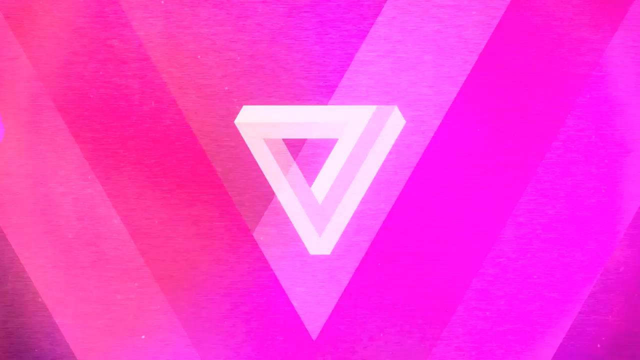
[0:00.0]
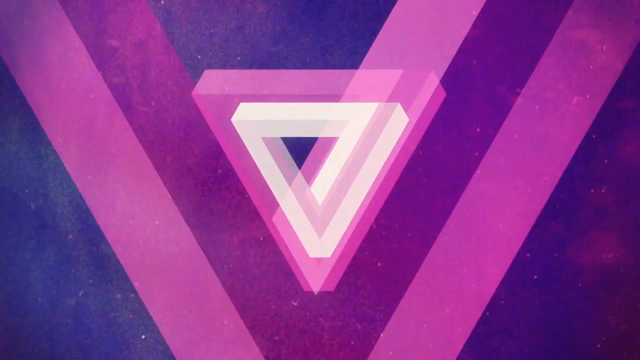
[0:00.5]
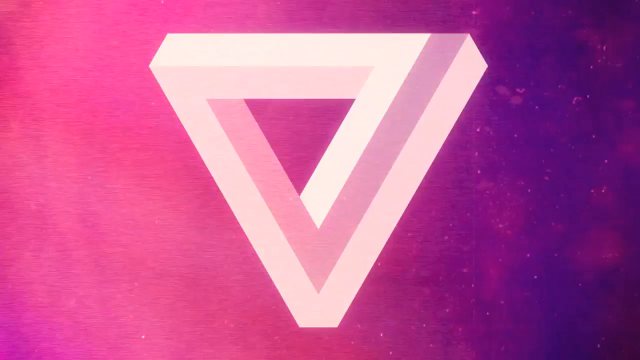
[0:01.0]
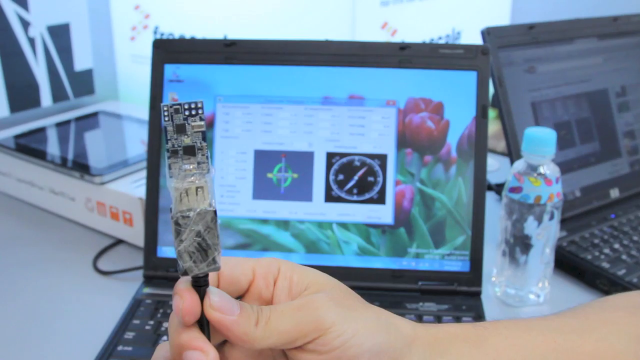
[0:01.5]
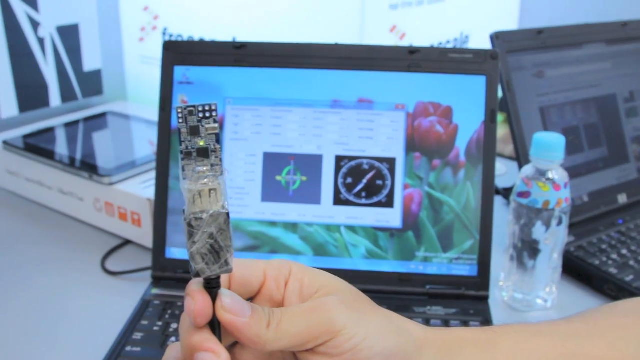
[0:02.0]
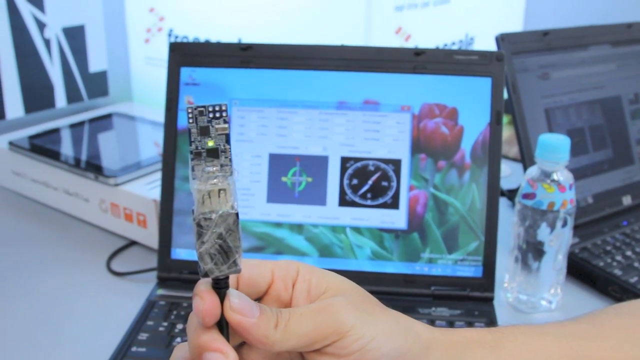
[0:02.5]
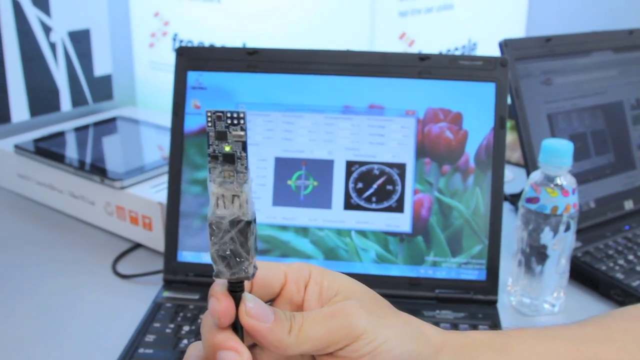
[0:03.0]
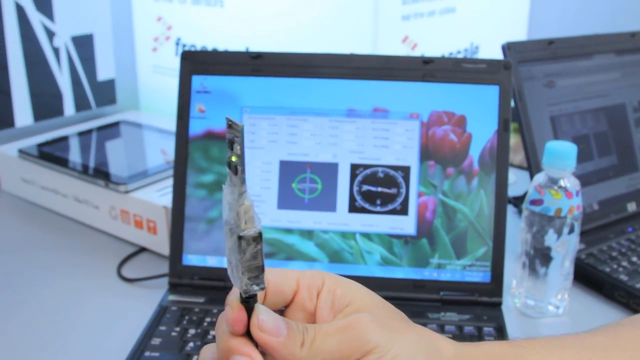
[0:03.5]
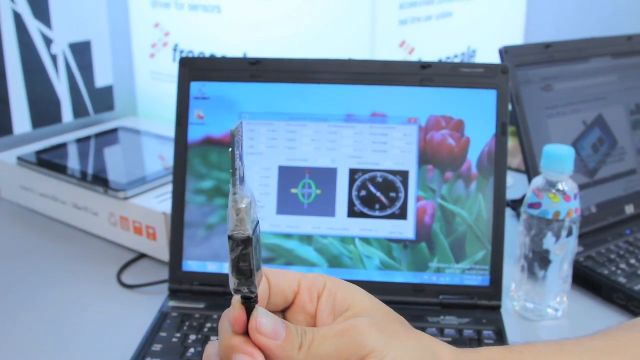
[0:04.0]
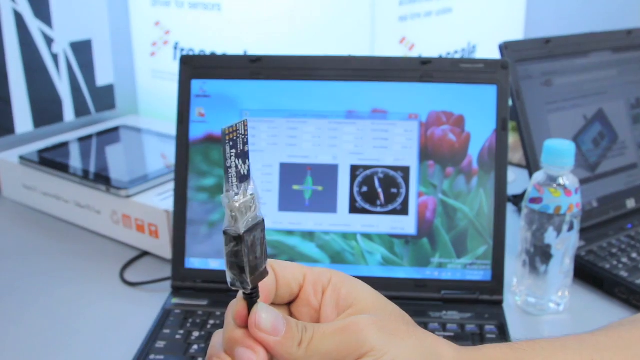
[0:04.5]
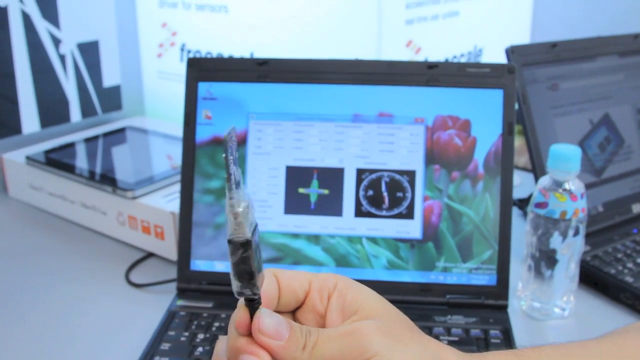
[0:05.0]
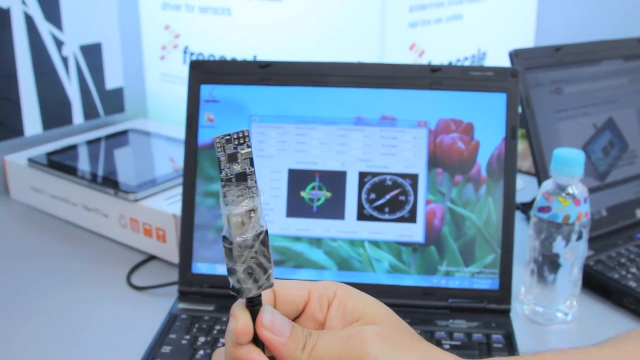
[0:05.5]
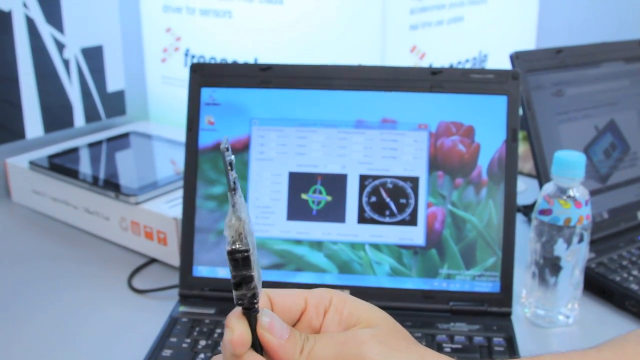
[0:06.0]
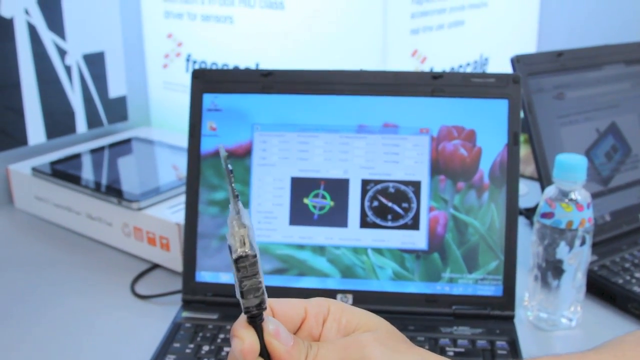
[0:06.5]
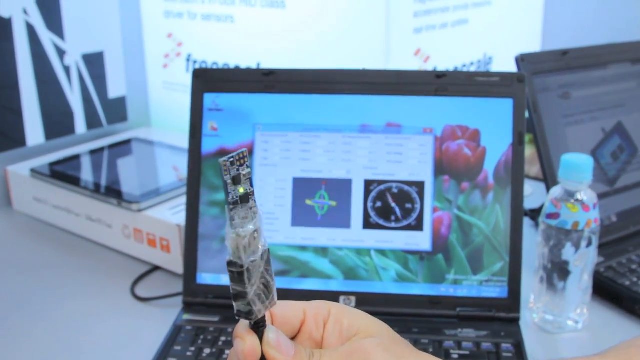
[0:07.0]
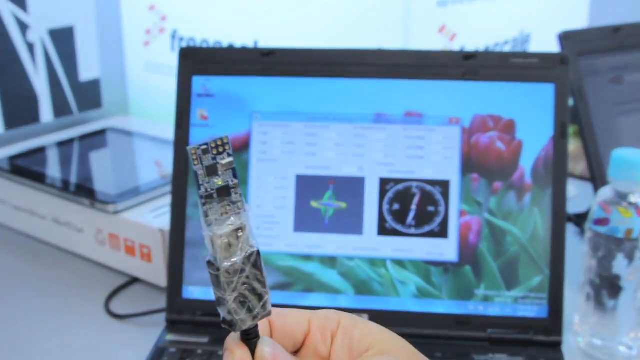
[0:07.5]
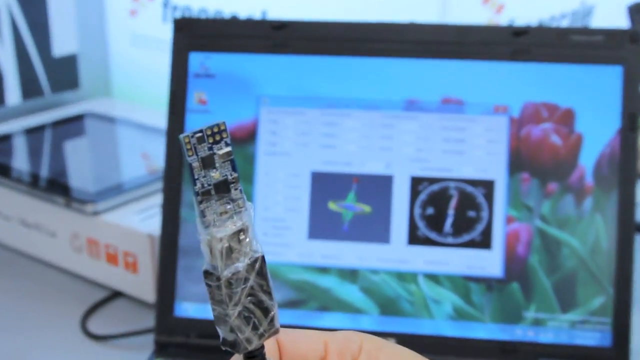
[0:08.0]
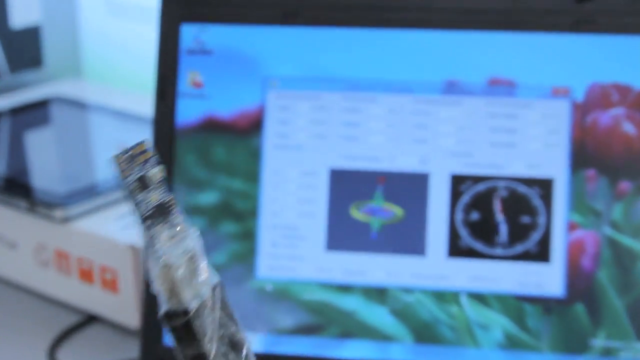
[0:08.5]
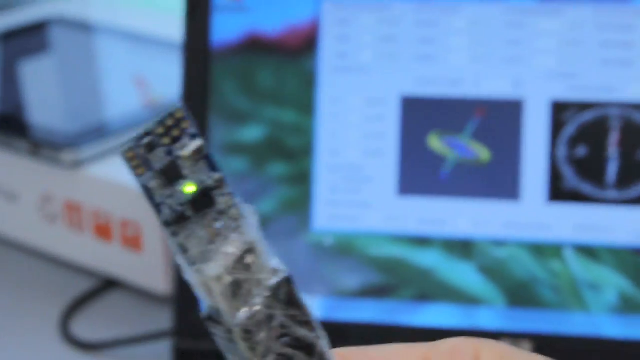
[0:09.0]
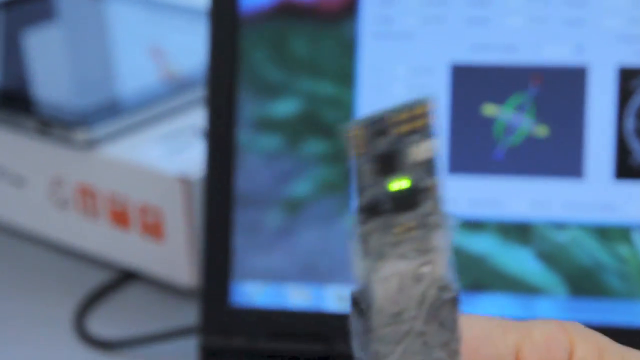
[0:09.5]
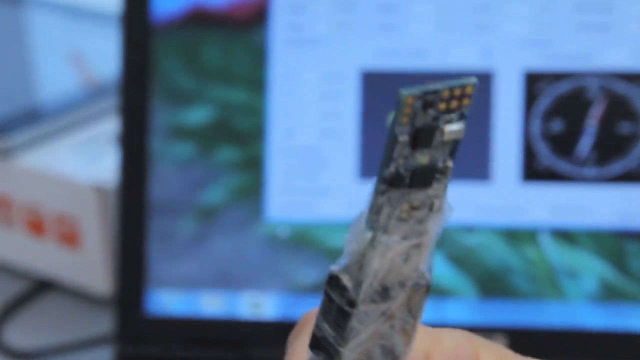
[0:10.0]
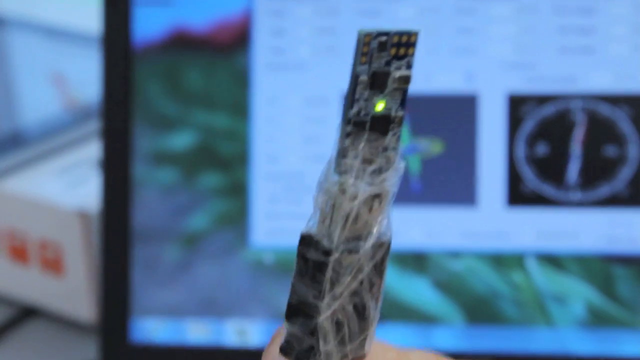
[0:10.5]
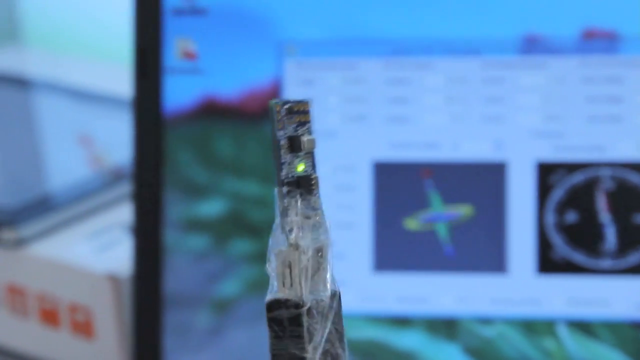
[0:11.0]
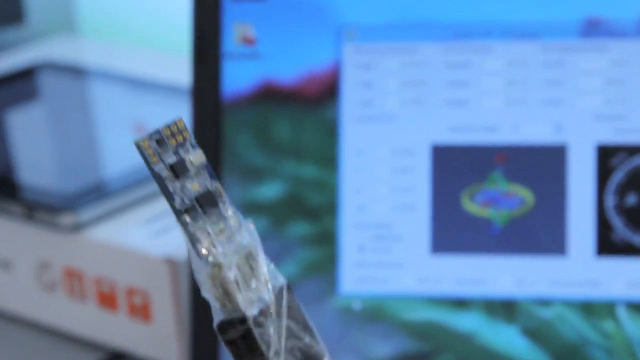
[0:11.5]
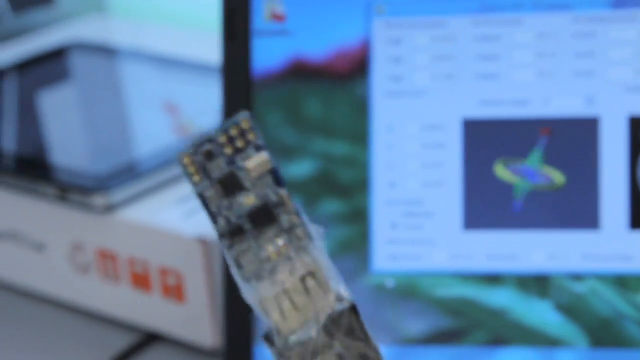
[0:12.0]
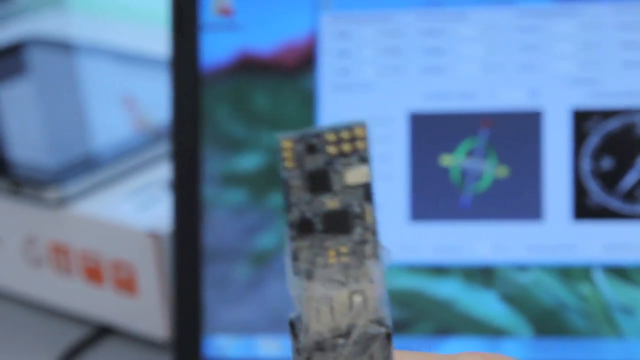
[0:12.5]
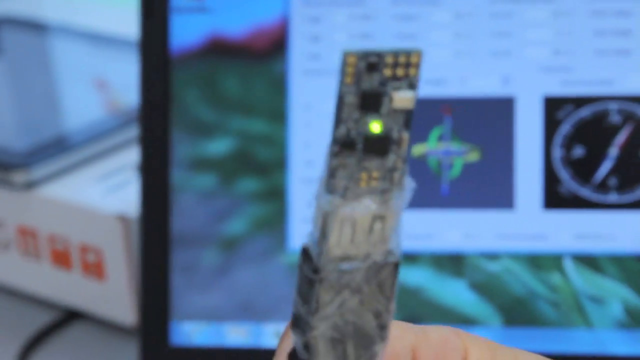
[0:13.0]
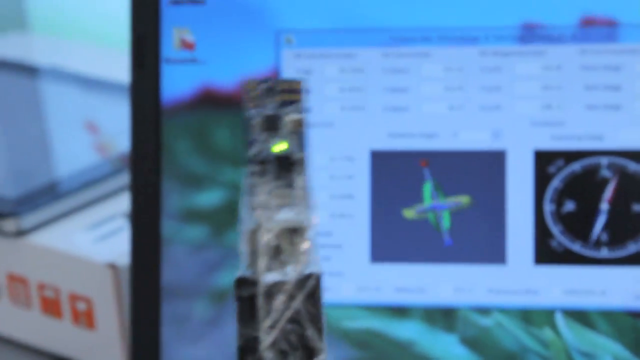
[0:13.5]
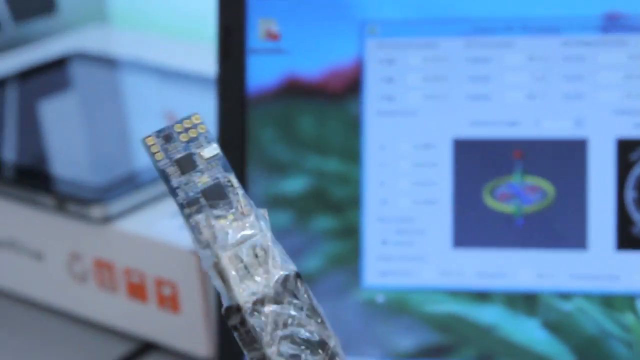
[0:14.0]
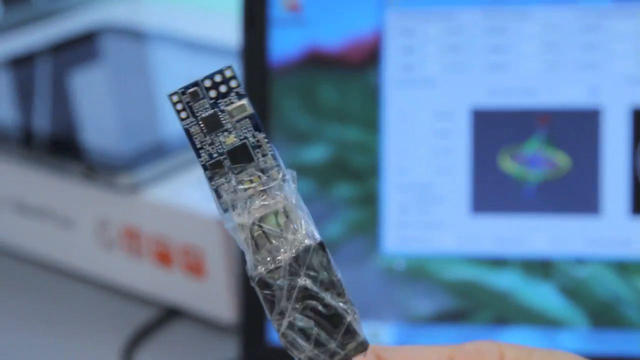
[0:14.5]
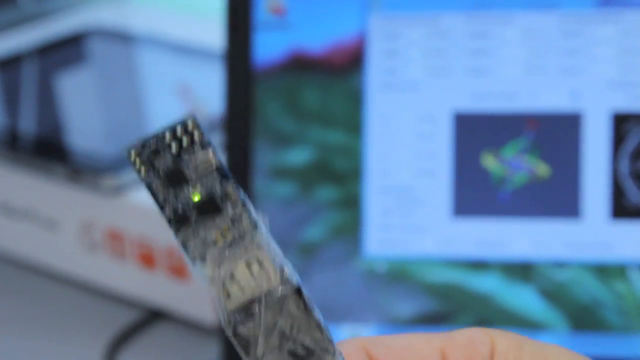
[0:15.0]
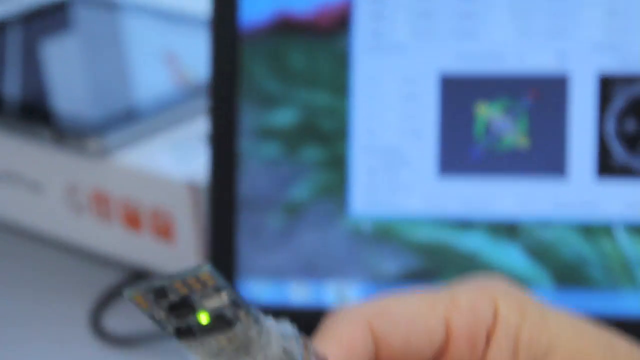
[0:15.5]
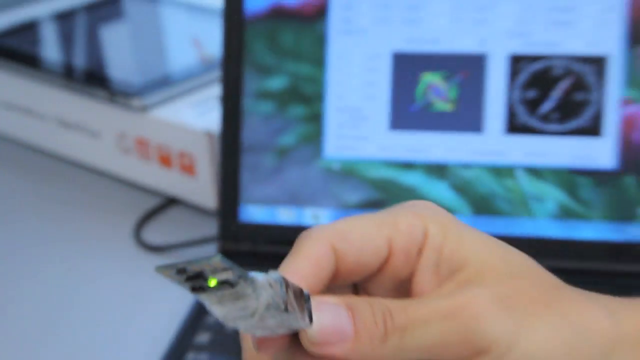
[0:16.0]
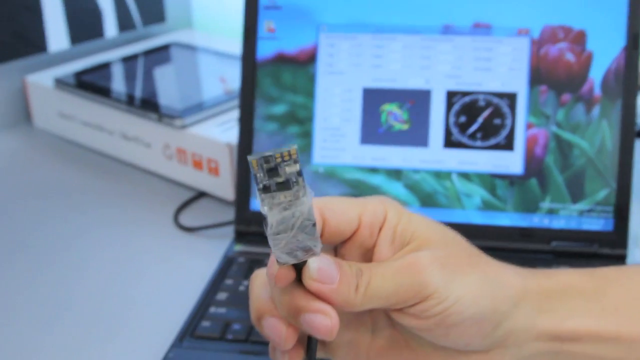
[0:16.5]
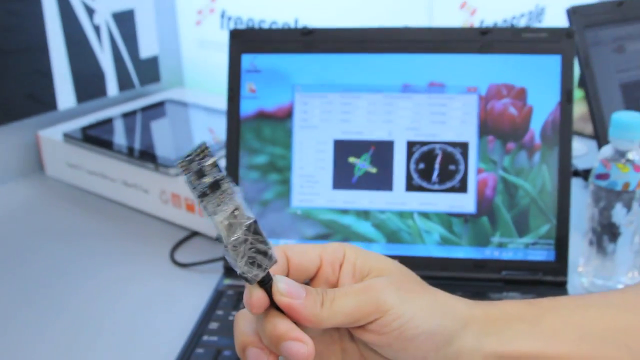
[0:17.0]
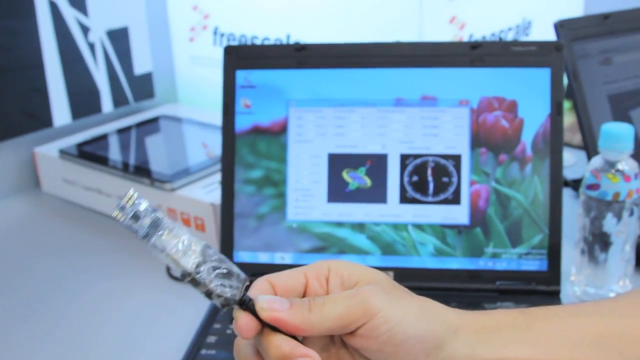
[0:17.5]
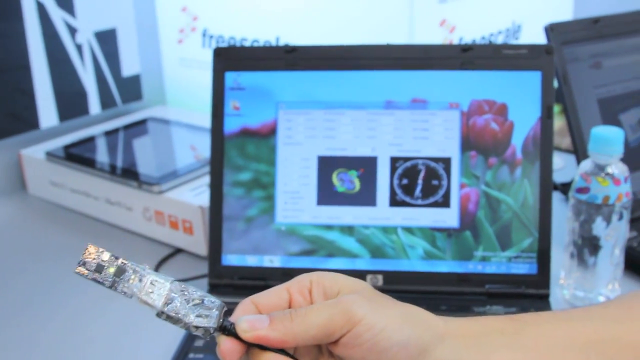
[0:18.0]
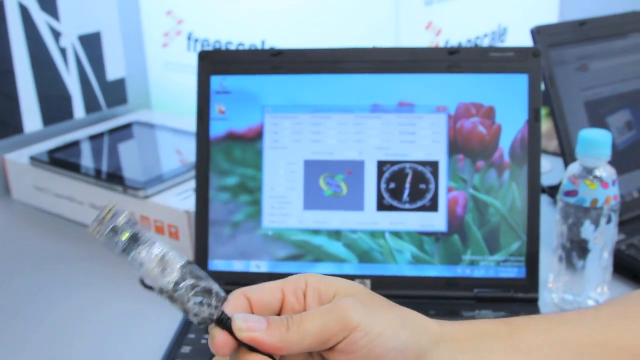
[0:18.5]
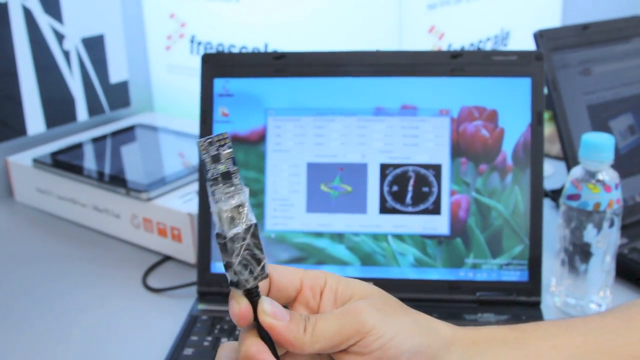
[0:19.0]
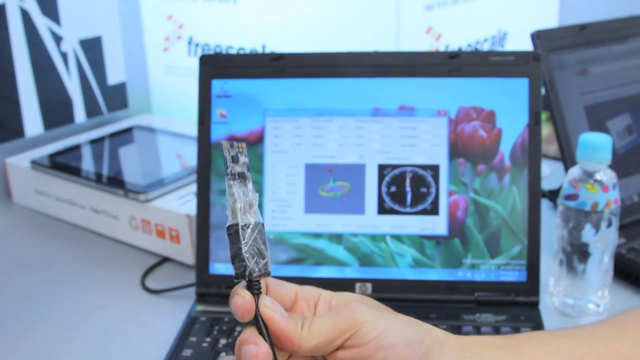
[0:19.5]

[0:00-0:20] An inverted purple and pink triangle appears with a smaller white triangle in its center. The white triangle then grows larger than the pink one, and in a synchronized motion they become one single triangle. The graphic quickly switches to a shot of two laptops and a man holding up a computer chip connected with a wire. On the laptop, a program is open showing some kind of compass and an icon, a cross with green rings around it. The laptop wallpaper has tulips. The man spins the chip by the cord left and right, and the camera zooms up closely on the chip, which has a green LED light flashing on and off. He moves the chip from left to right and shows it from all angles to the camera, revealing his fingers. The laptop remains in the background.